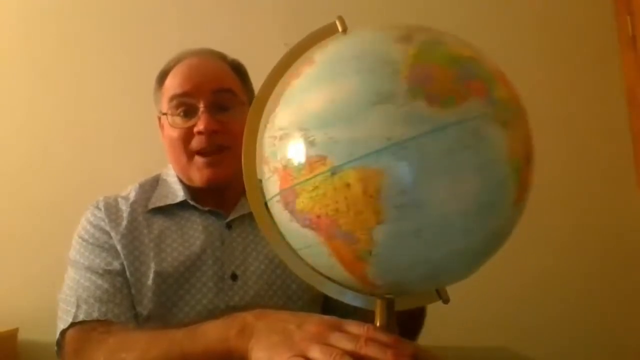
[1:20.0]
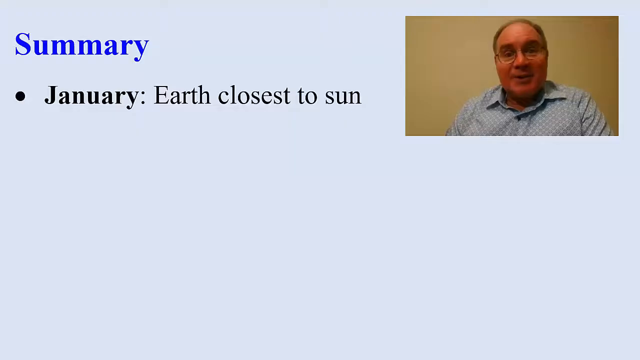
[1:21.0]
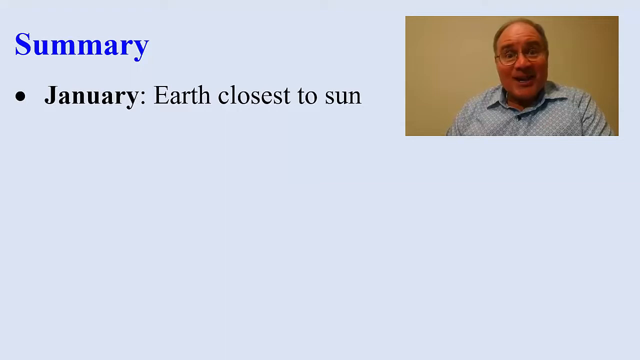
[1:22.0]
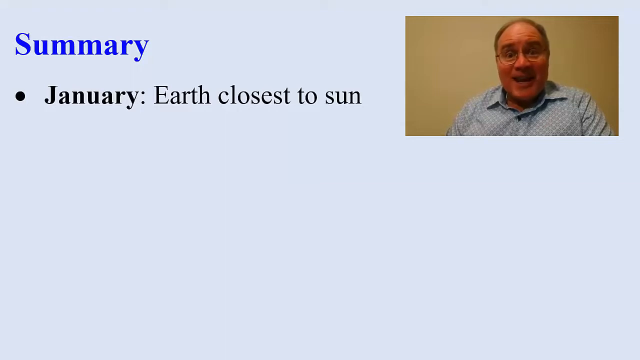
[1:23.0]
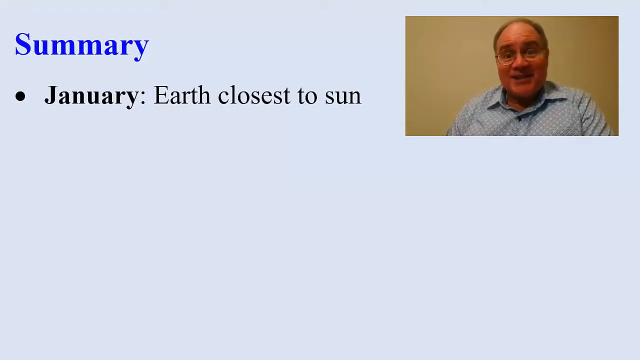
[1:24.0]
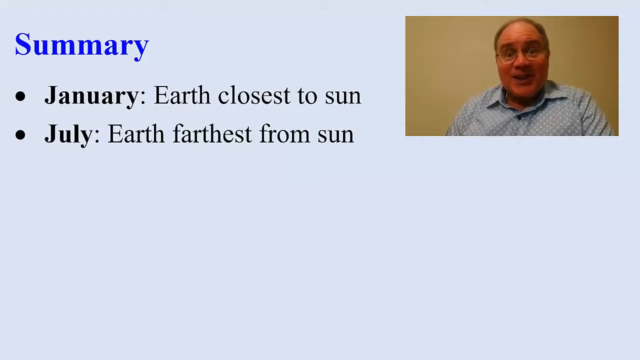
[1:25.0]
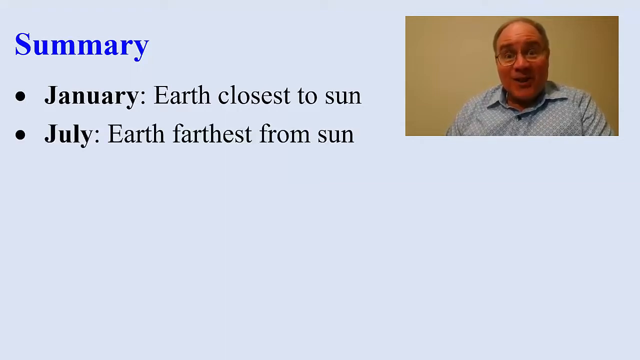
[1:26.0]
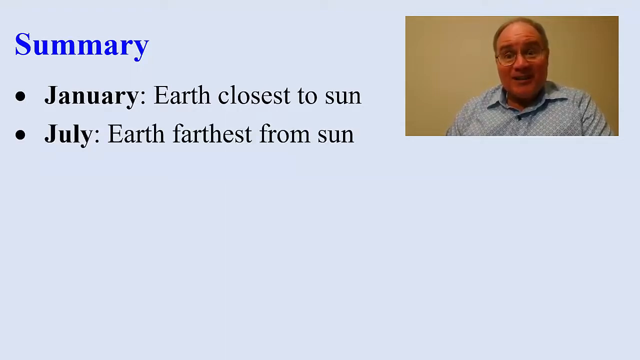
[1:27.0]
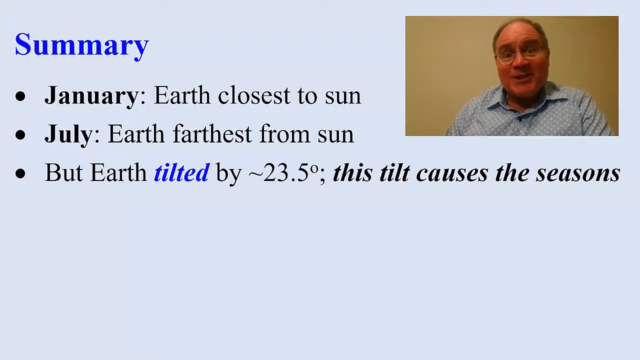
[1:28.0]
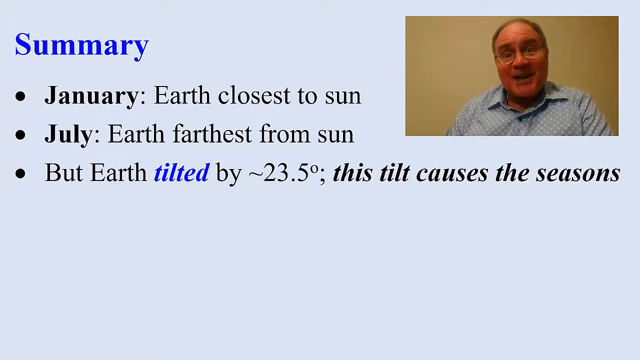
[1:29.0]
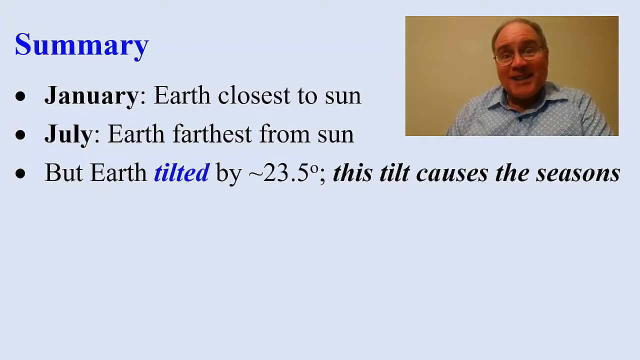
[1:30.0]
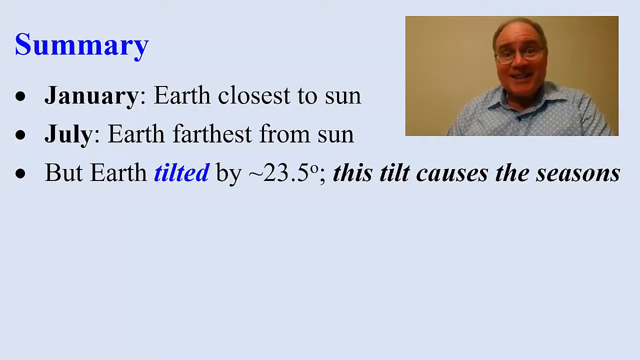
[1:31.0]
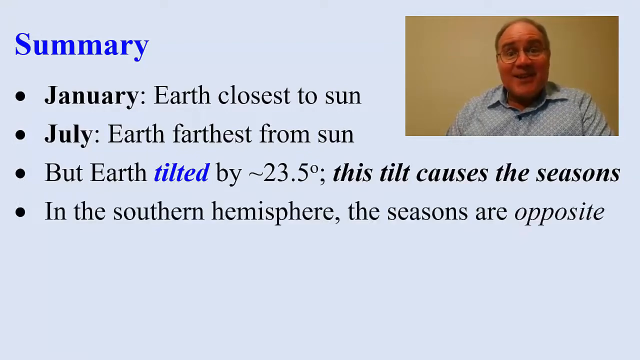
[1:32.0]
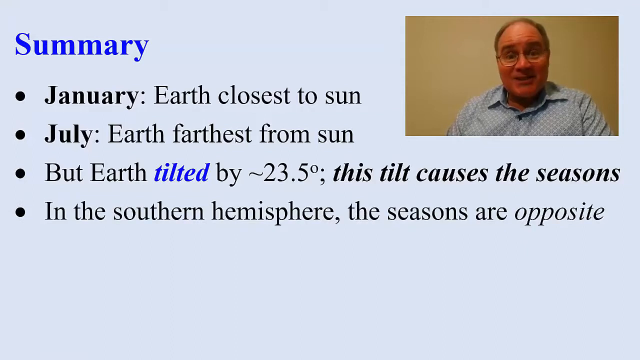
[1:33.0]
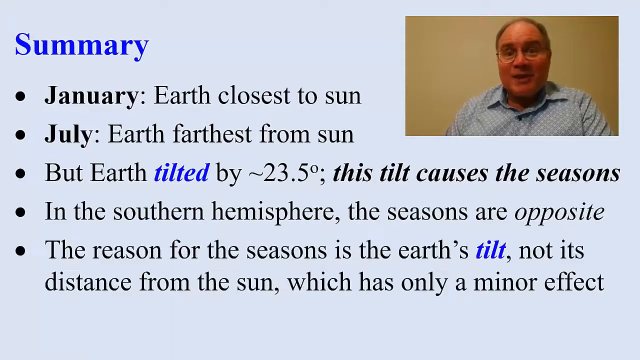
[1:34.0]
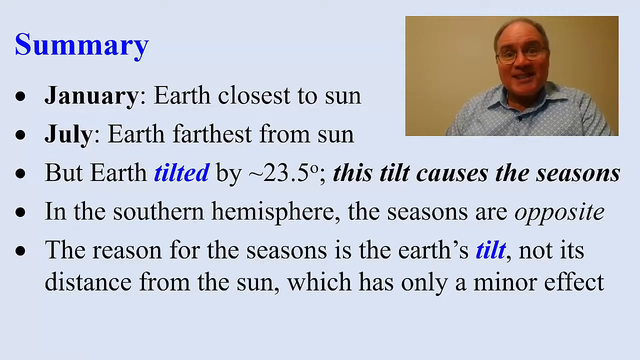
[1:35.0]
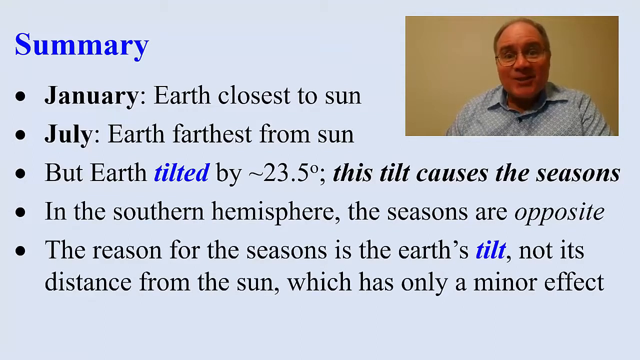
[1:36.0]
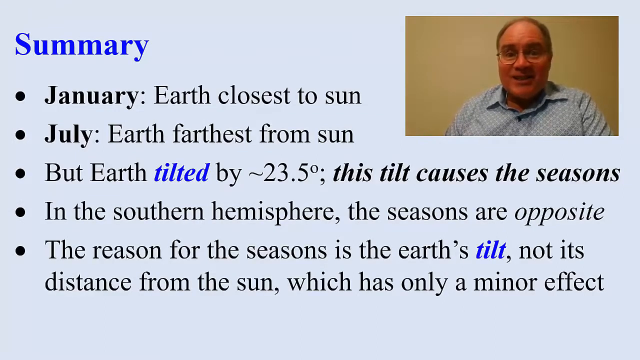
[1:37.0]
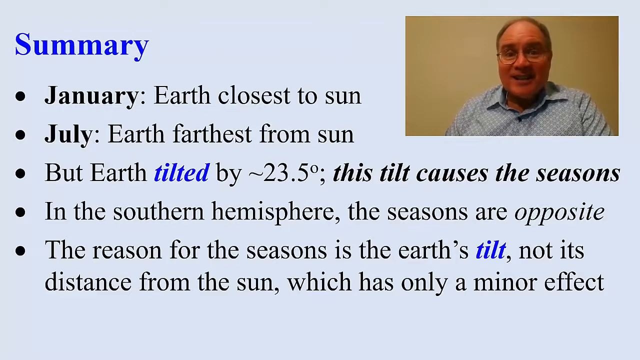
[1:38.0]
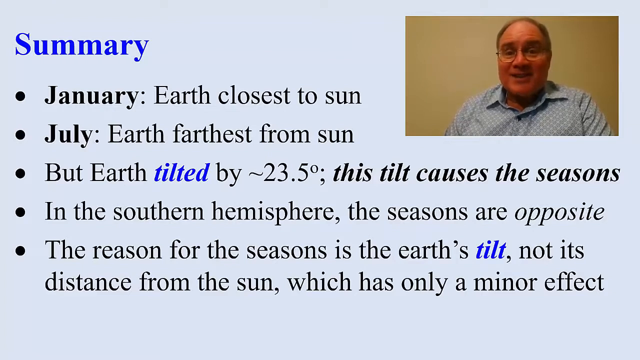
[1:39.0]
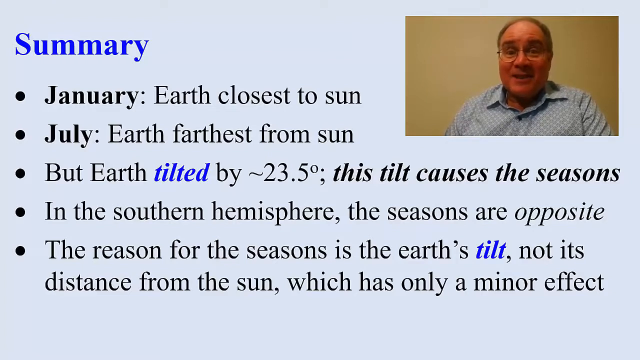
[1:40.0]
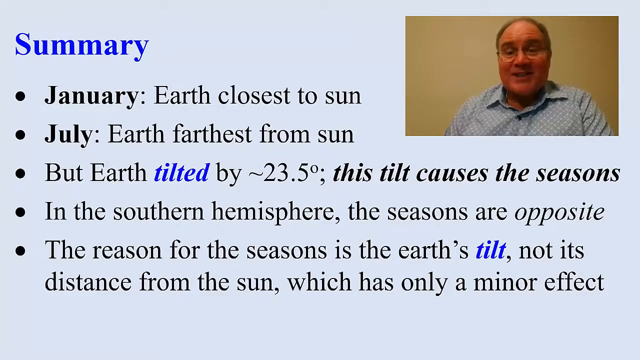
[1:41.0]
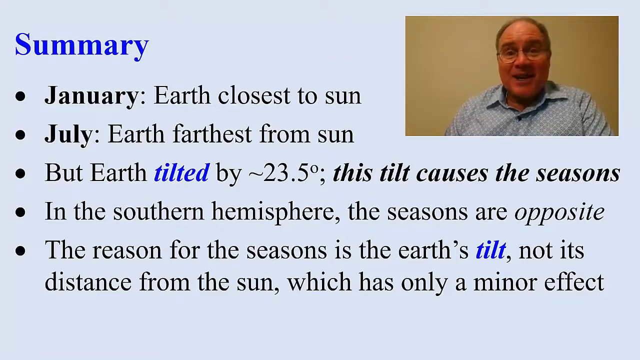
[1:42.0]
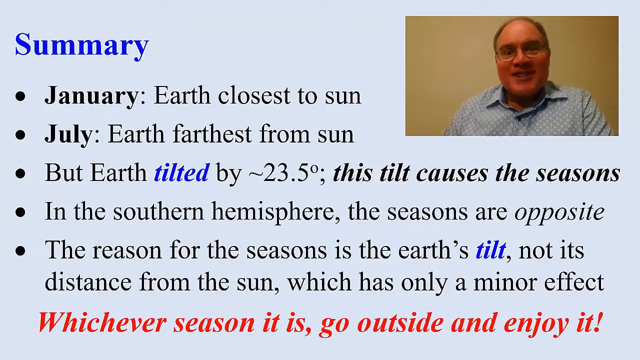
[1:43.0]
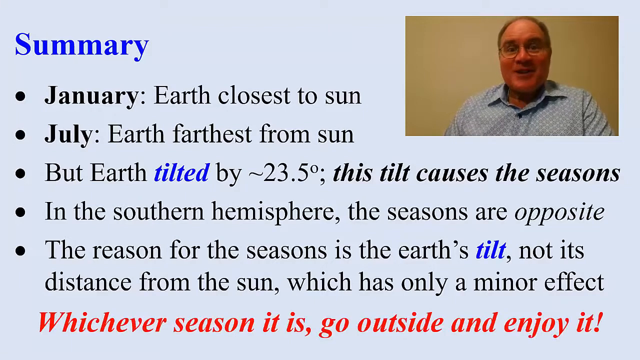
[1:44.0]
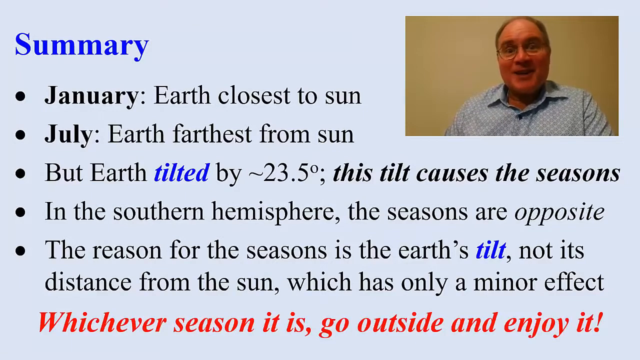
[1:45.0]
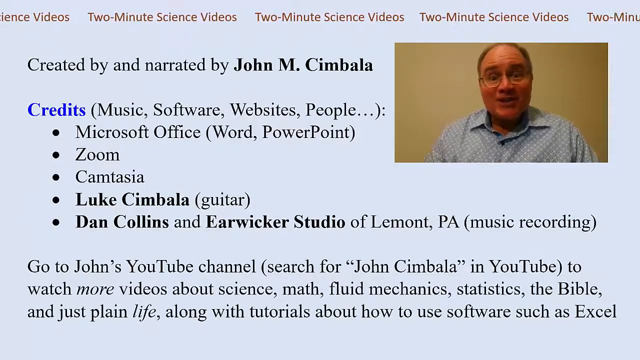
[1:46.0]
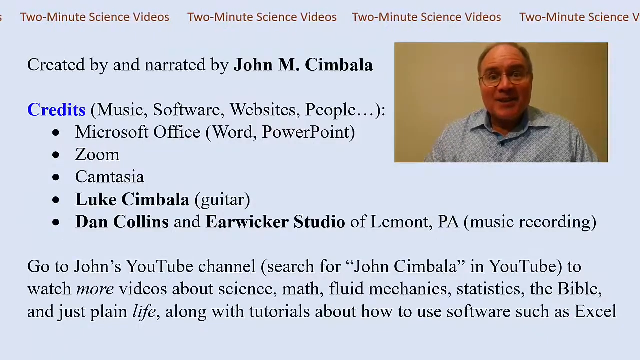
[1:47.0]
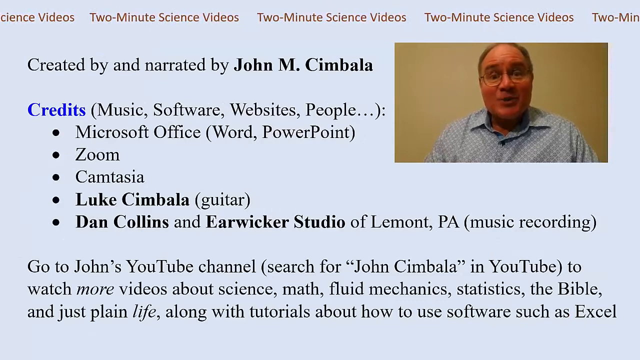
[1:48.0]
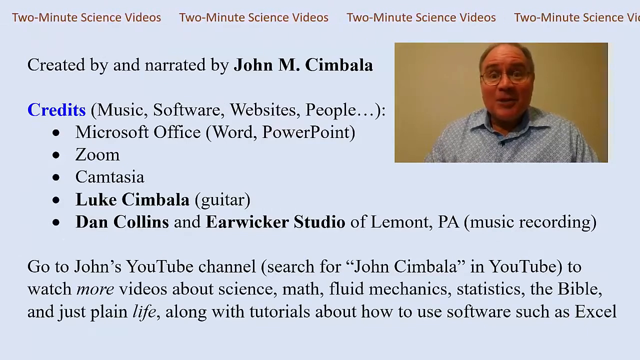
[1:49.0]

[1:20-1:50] John appears to be sitting closer to the globe, as the middle portion of the globe slightly covers the lower portion of his face. He is still in the room with the white wall as the background, and what looks like a bookshelf or something is slightly over in the corner of the room on the upper right side. The view then goes to a blue screen with a summary of the lesson, with John in the picture-in-picture box in the upper right corner, still speaking to the audience. Bullet points appear: "January, Earth closest to the sun", "July, Earth farthest from the sun", "but Earth tilted about 23.5 degrees. This tilt causes the seasons", "in the southern hemisphere; the seasons are opposite", and a fifth, "The reason for the seasons is the Earth's tilt, not its distance from the sun, which has only a minor effect". John smiles and keeps speaking while looking straight ahead, moving his head slightly, as the words "two-minute science lesson videos" move in red across the top of the screen like a ticker.